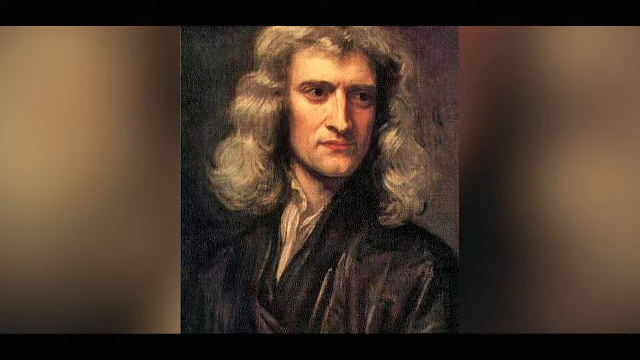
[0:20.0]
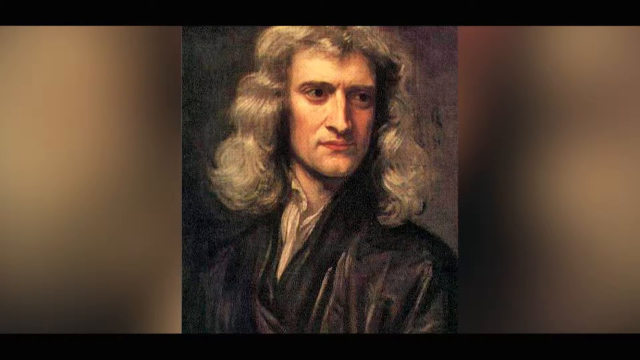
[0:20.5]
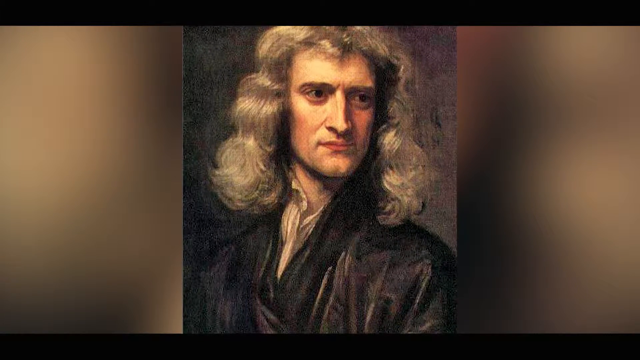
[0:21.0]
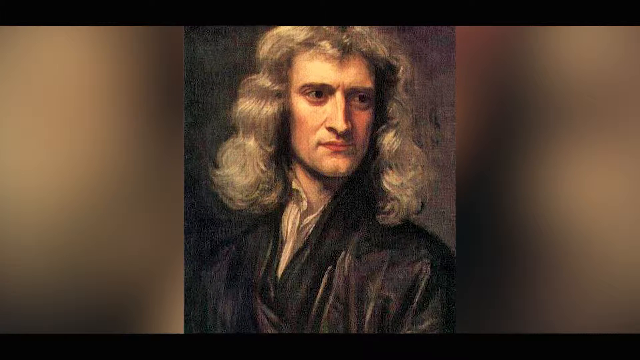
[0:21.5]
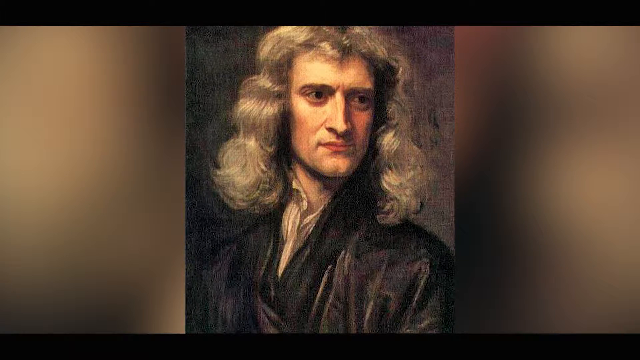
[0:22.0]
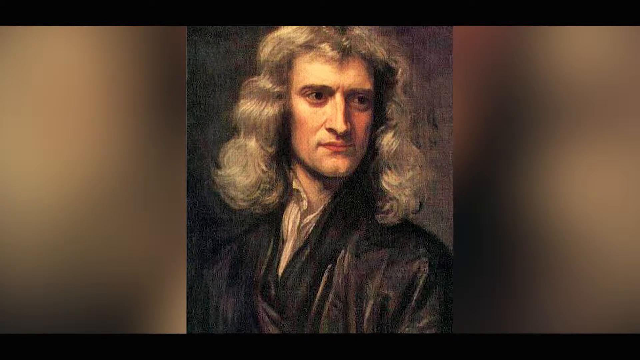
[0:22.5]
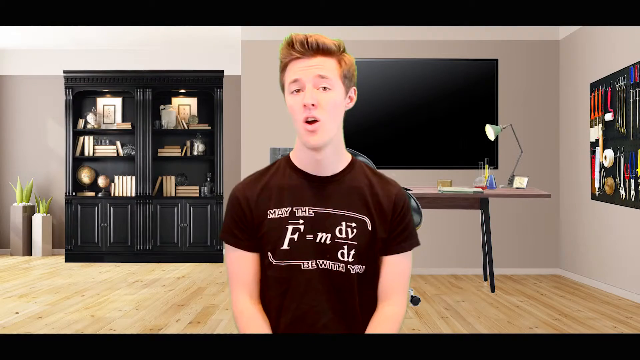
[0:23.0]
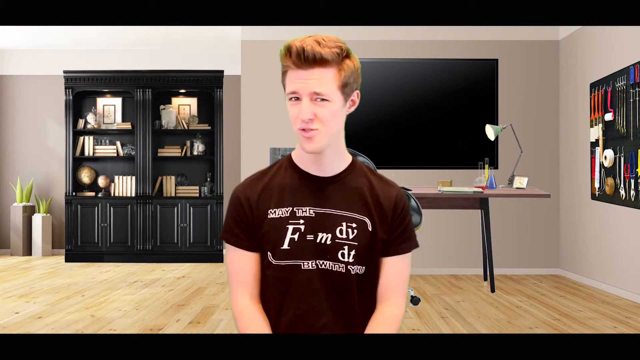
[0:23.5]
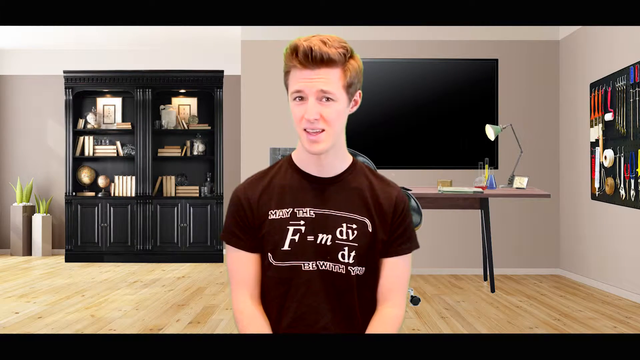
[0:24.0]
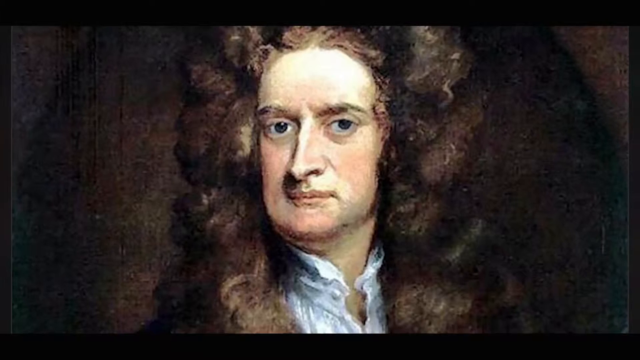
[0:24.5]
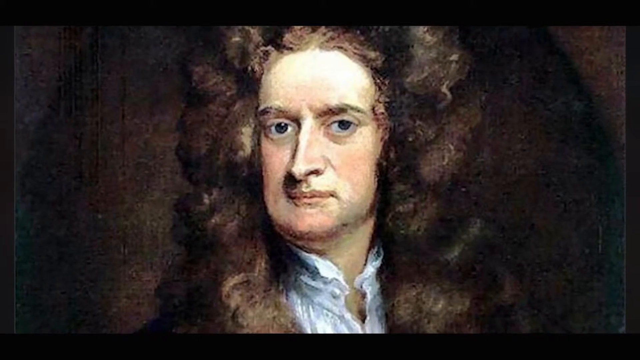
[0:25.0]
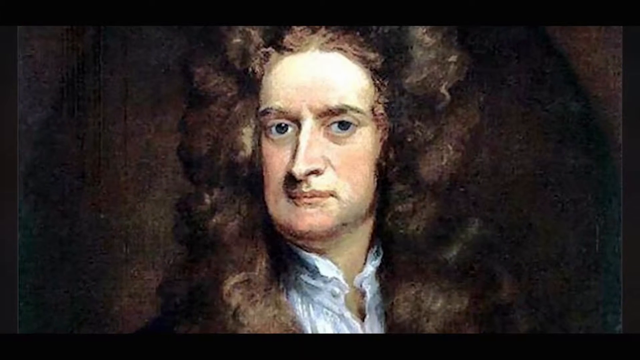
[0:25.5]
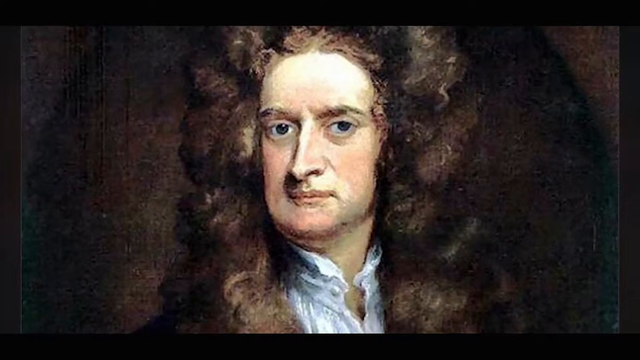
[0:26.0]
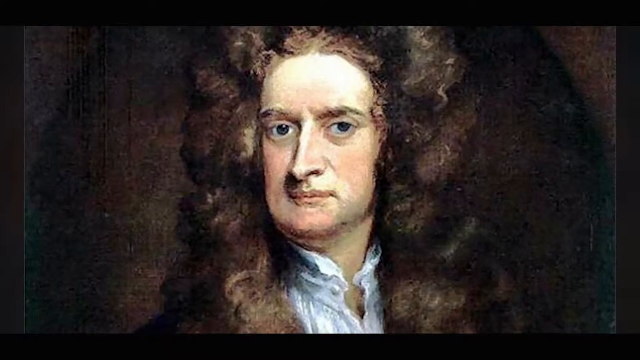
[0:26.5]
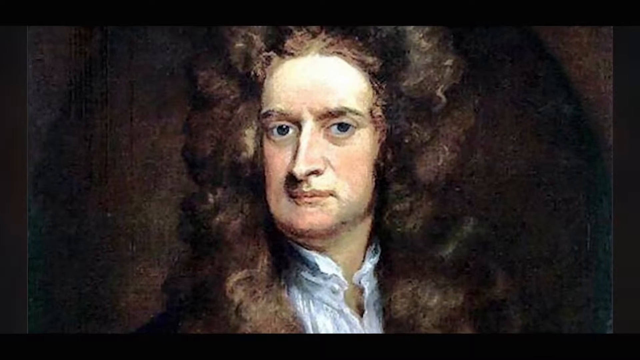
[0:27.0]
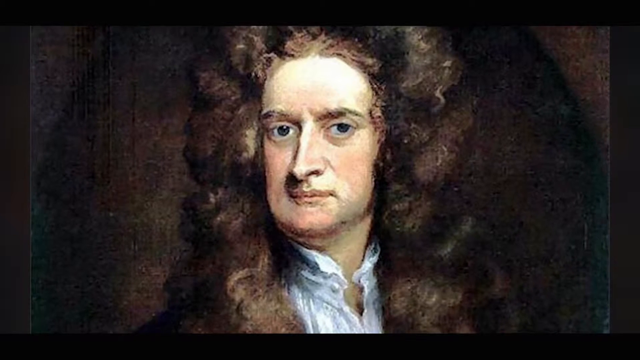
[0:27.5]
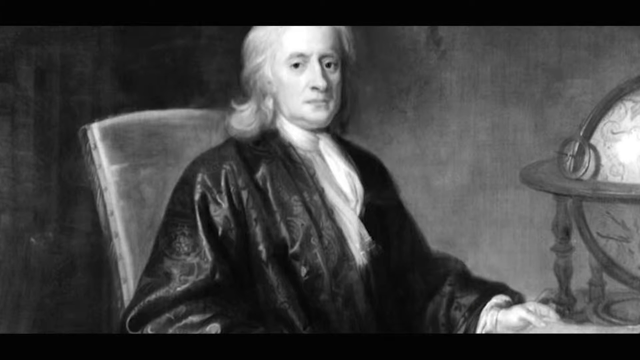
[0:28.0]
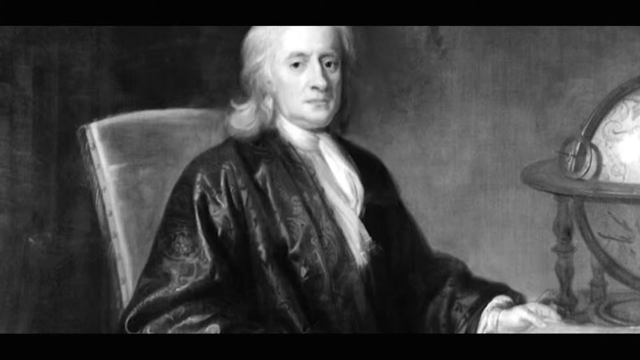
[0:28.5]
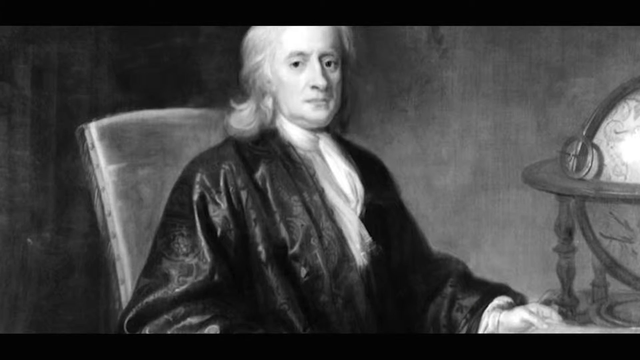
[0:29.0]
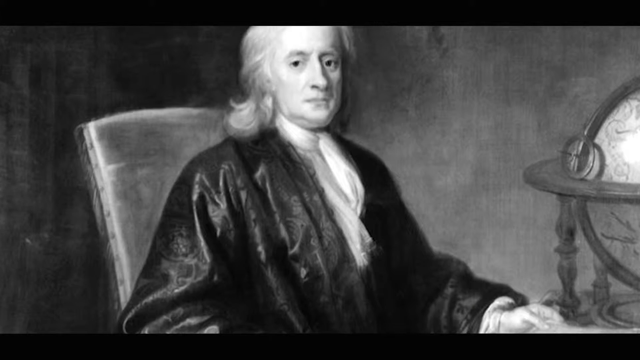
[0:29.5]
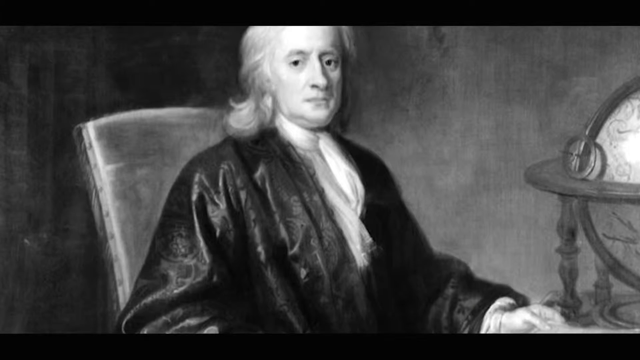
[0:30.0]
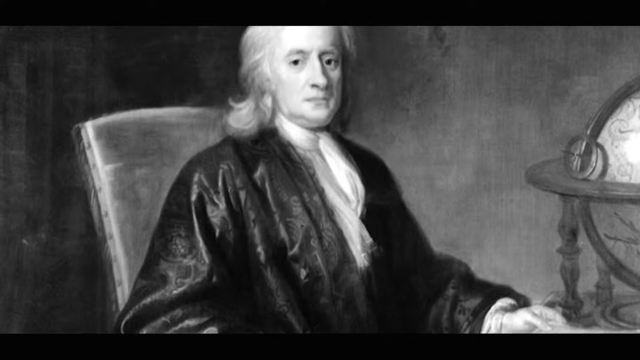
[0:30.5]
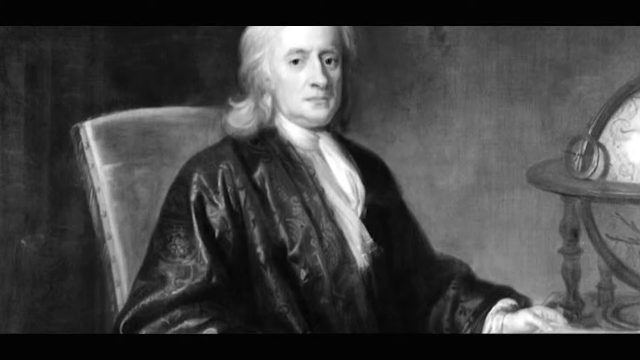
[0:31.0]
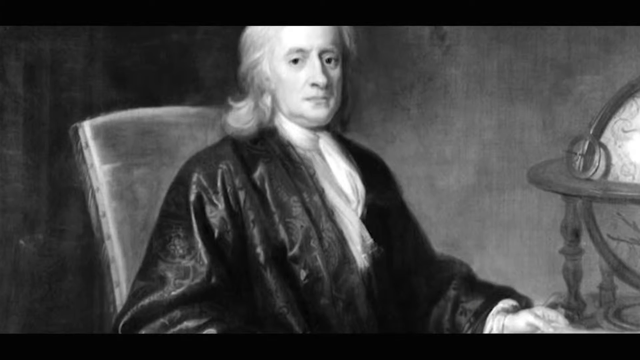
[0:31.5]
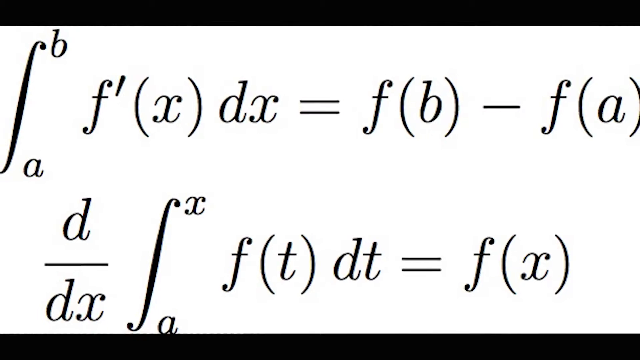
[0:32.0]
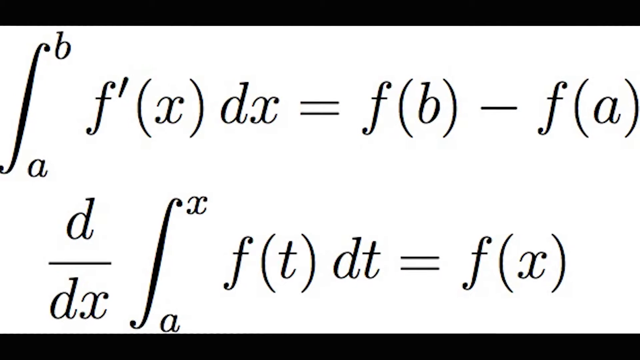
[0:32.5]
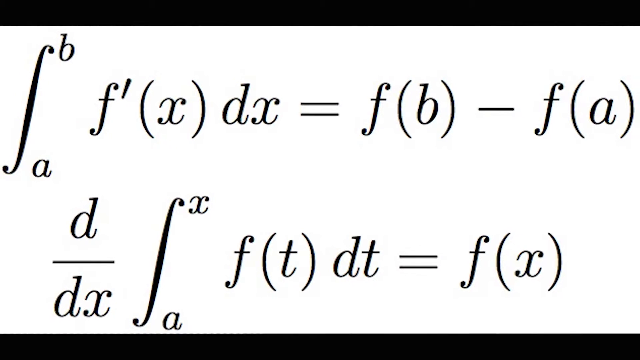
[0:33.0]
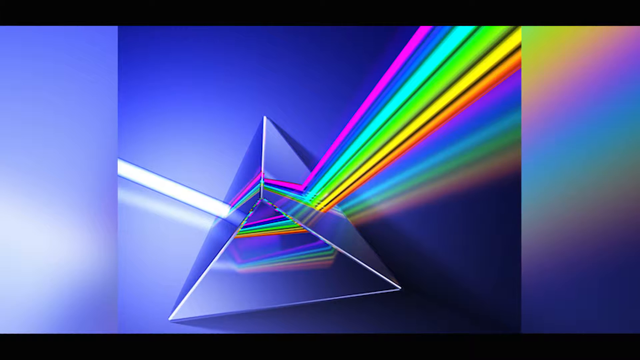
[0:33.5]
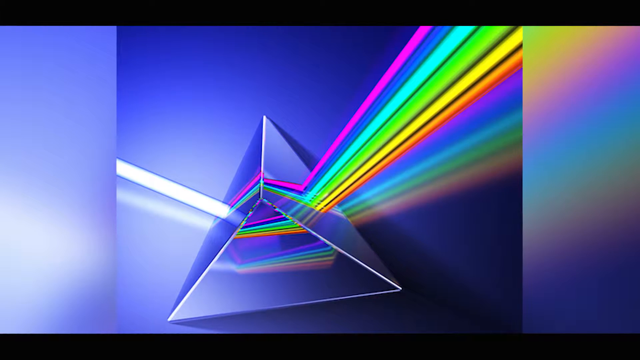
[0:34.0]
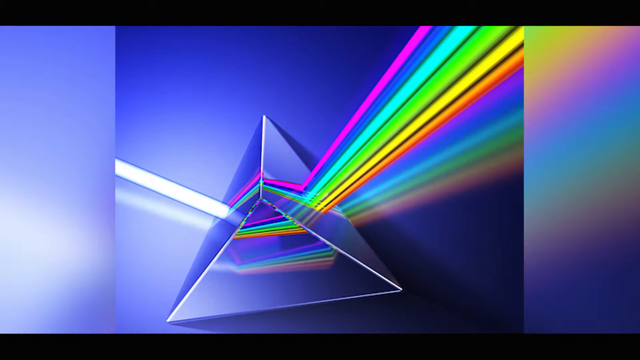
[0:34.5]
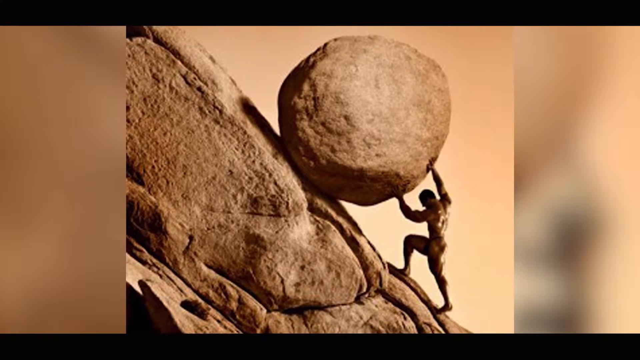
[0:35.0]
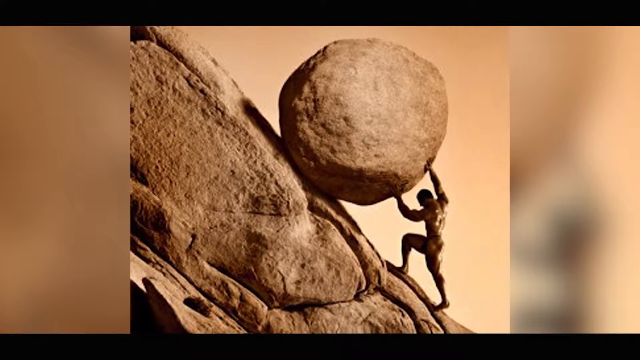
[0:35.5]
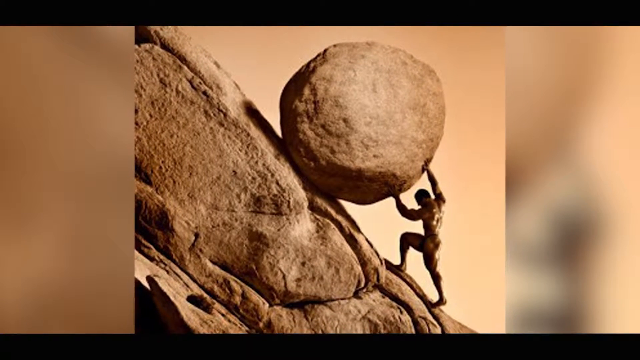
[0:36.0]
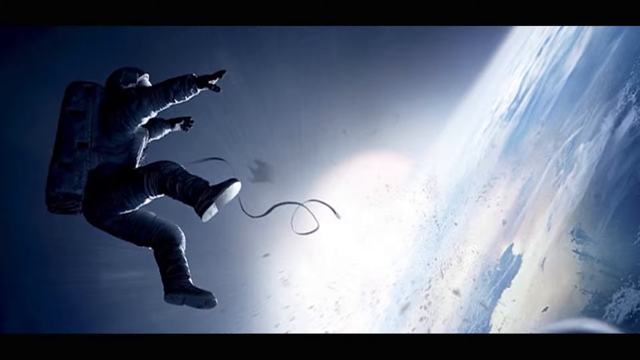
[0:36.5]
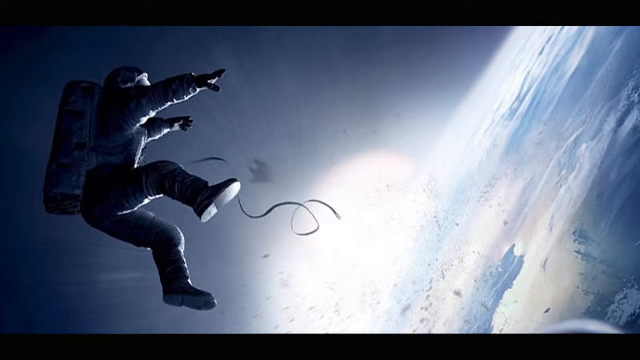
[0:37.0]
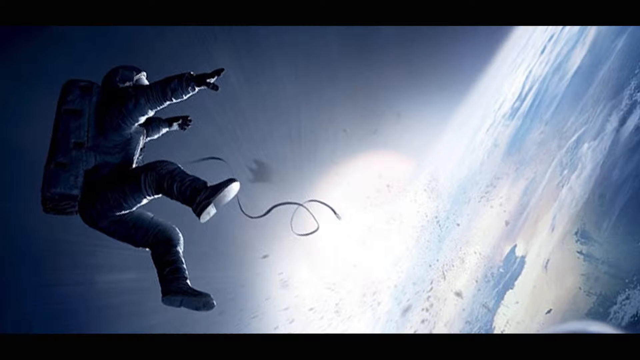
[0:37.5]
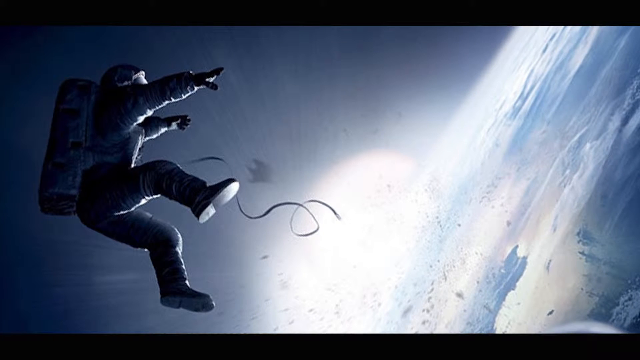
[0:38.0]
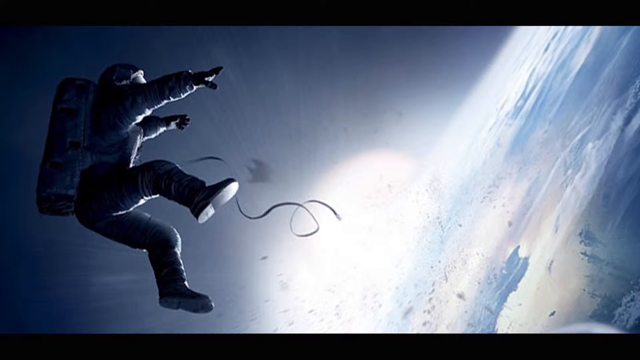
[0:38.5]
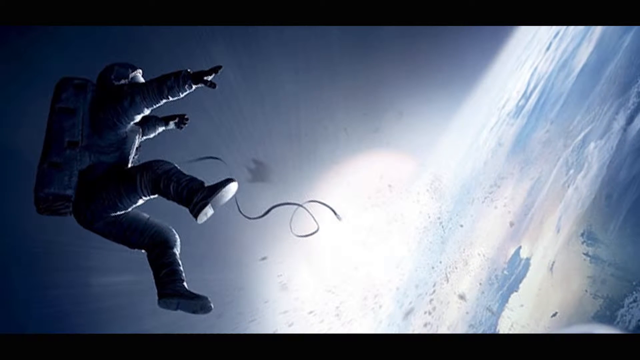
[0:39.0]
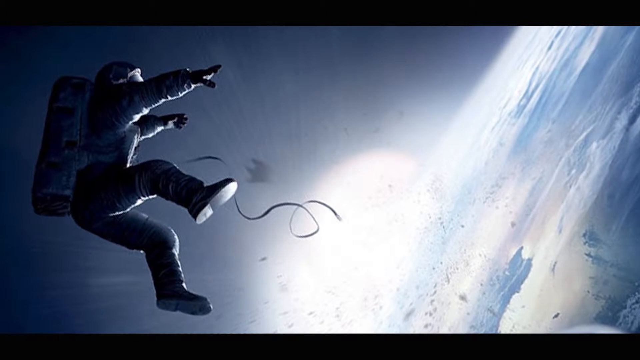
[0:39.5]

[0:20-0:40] A painting of a man appears, looking as if it was painted in the 1700s or 1800s. The man has long, curly gray hair and looks to his side with a serious face. He has low eyebrows, deep-set eye sockets, a big pointed nose, and small lips, and his mouth looks slightly frowning. He wears a white shirt typical of the 1700s and 1800s under a black jacket. The boy is then shown talking, apparently explaining the dice shown earlier, which seems to suggest the man in the painting invented dice. Another man is shown, with bulky black hair, looking directly at the screen with his head tilted slightly to the side. He has a serious expression, a sharply pointed nose, somewhat thicker lips, and a double chin, and he also wears a white shirt and a black jacket. Next is a black-and-white painting of a gray-haired man in a white shirt and a black jacket with various designs, sitting in a chair beside a globe and looking directly at the camera with a serious face. Integral equations follow, then a shape that looks like a pyramid with colors coming from it that look like a rainbow. A figure of a man climbs up a hill pushing a big stone, and then an astronaut with all his gear intact floats in space.